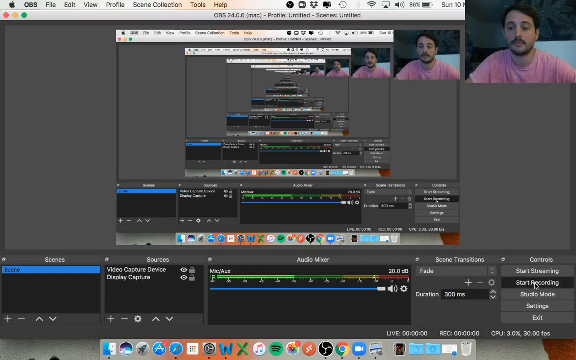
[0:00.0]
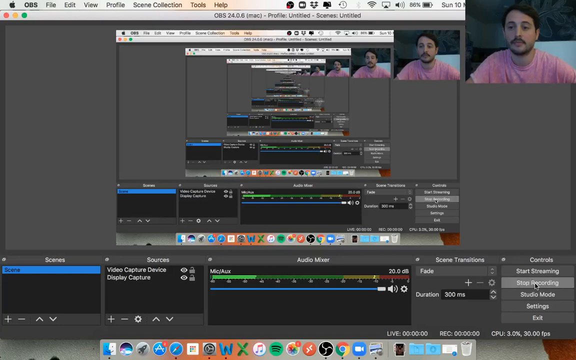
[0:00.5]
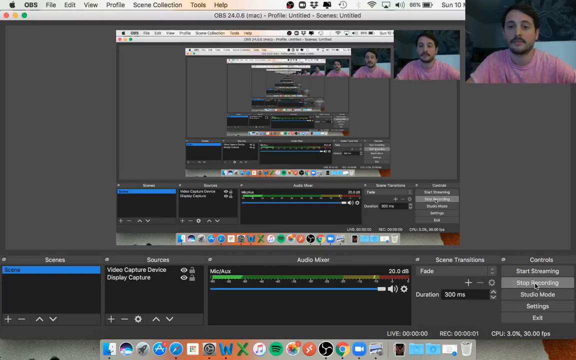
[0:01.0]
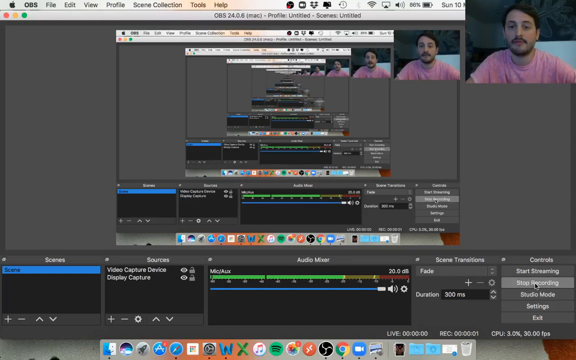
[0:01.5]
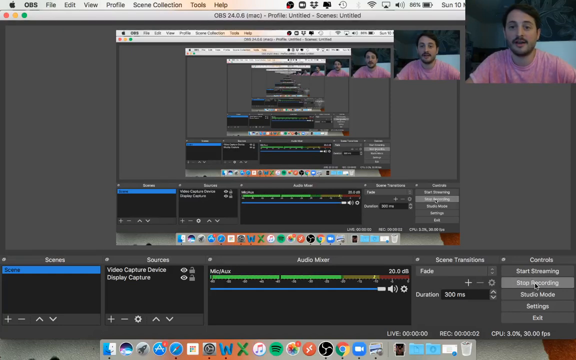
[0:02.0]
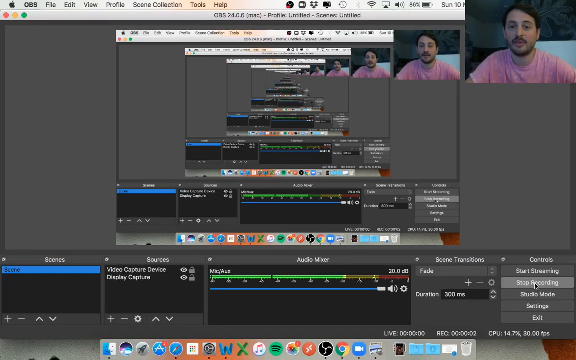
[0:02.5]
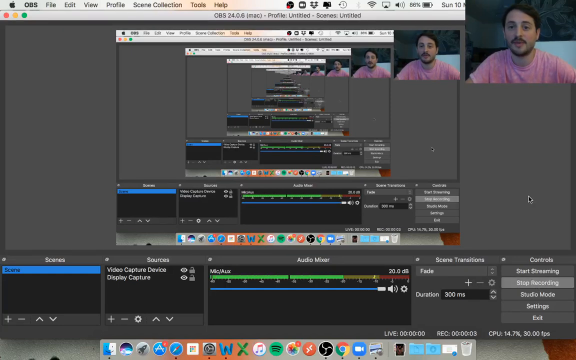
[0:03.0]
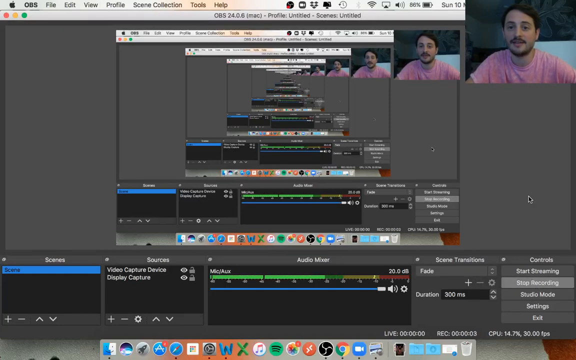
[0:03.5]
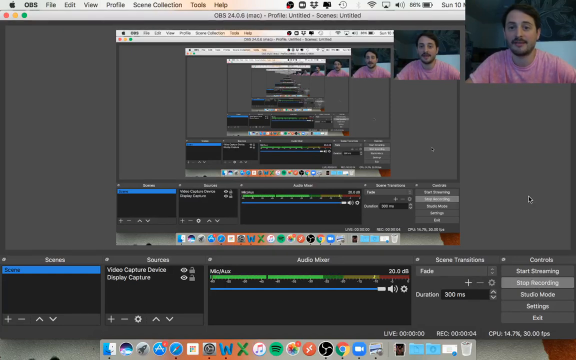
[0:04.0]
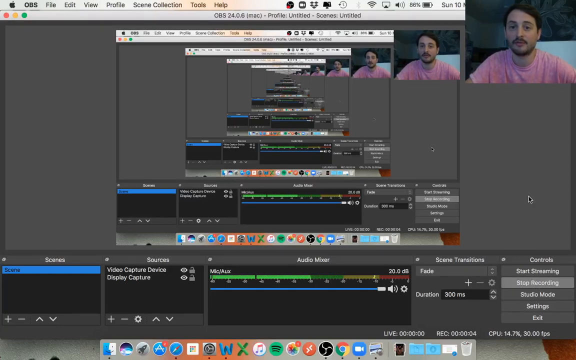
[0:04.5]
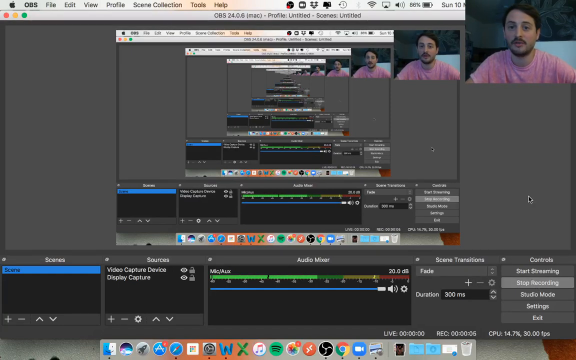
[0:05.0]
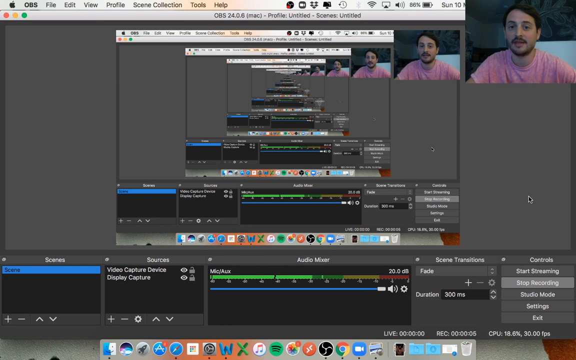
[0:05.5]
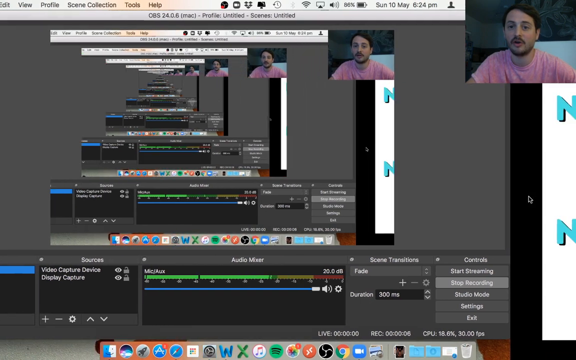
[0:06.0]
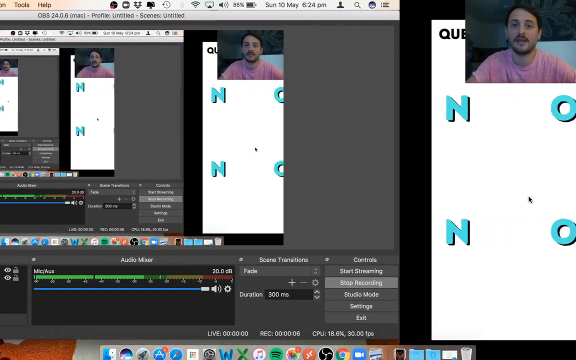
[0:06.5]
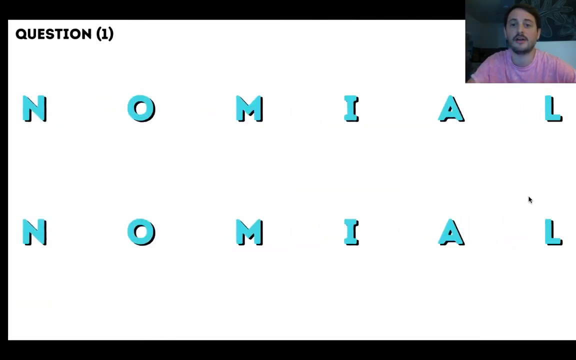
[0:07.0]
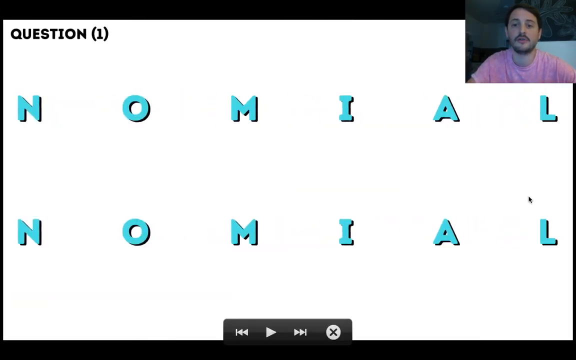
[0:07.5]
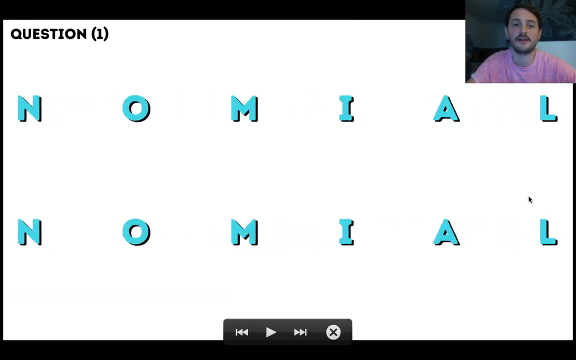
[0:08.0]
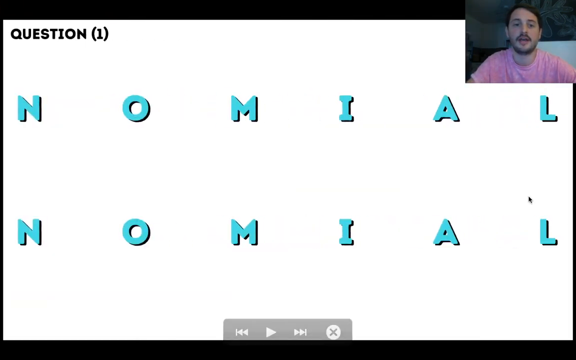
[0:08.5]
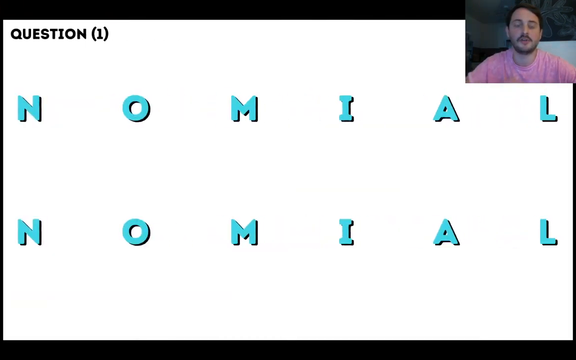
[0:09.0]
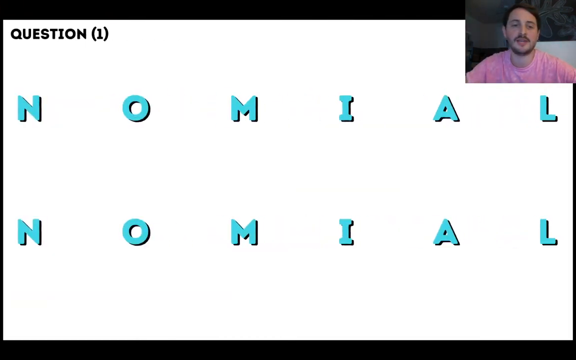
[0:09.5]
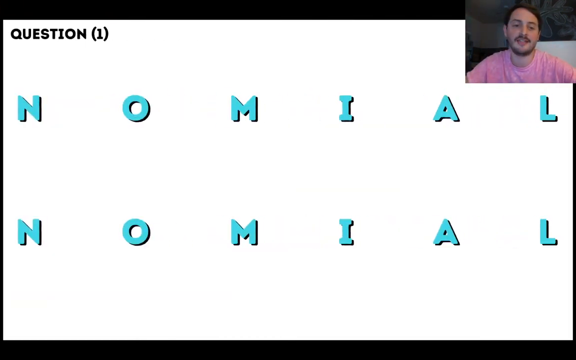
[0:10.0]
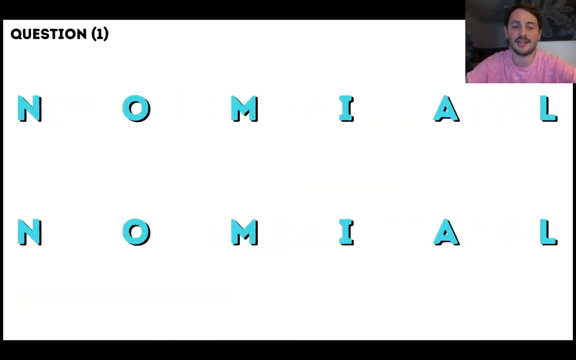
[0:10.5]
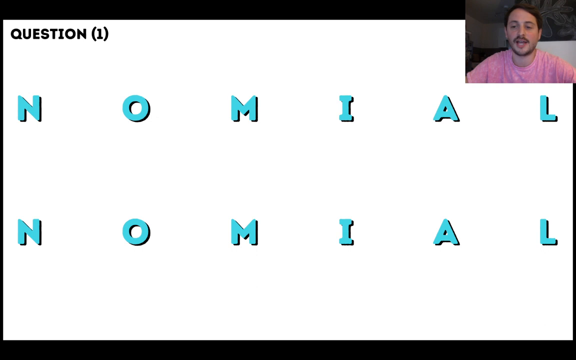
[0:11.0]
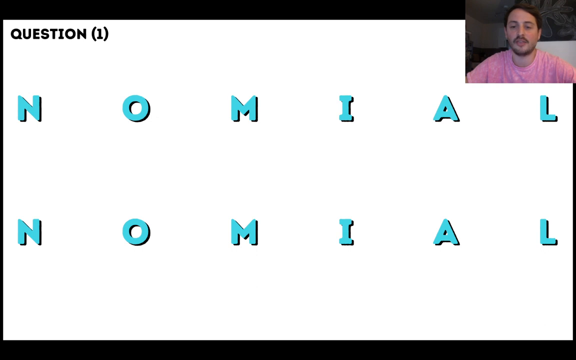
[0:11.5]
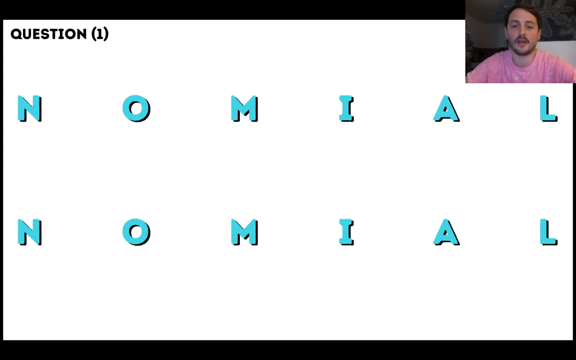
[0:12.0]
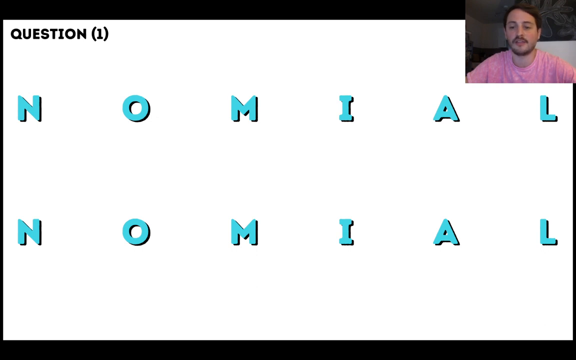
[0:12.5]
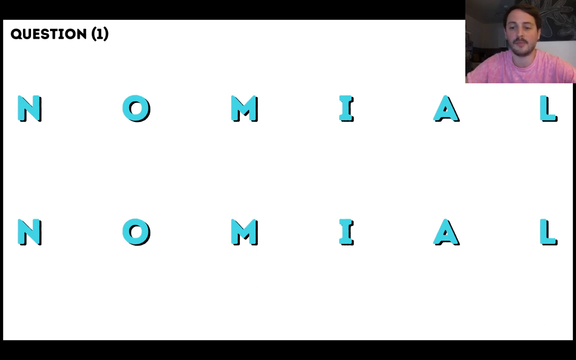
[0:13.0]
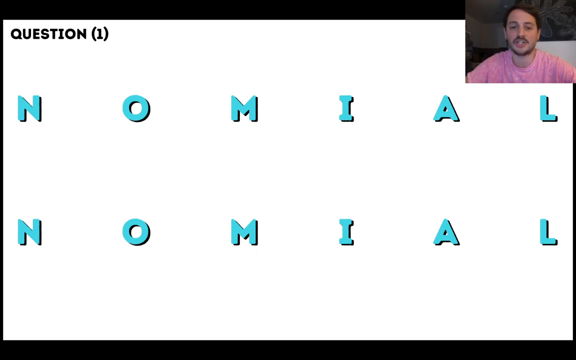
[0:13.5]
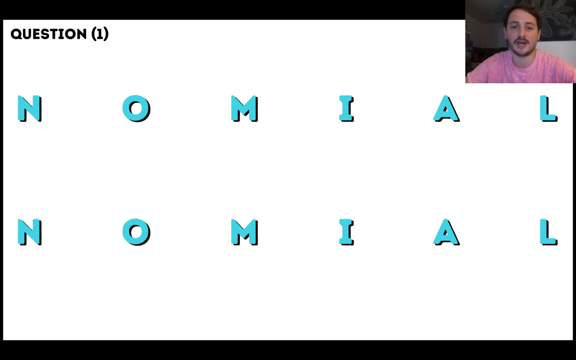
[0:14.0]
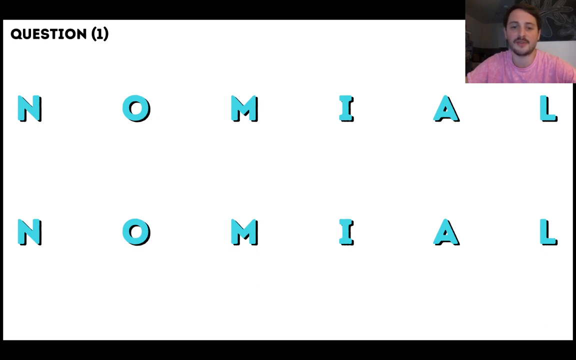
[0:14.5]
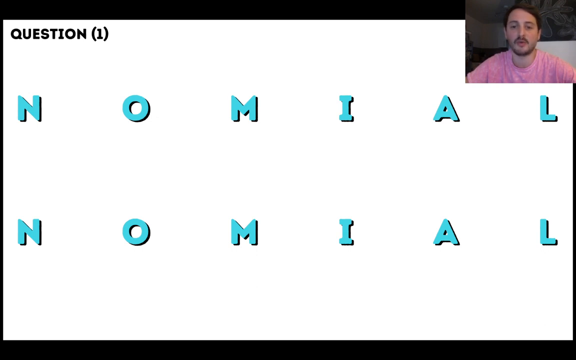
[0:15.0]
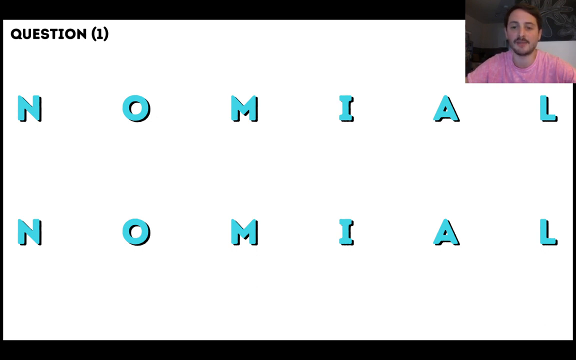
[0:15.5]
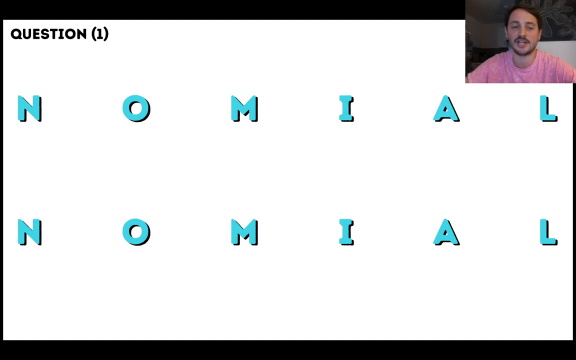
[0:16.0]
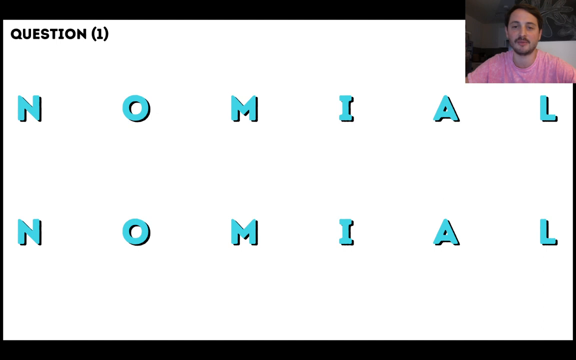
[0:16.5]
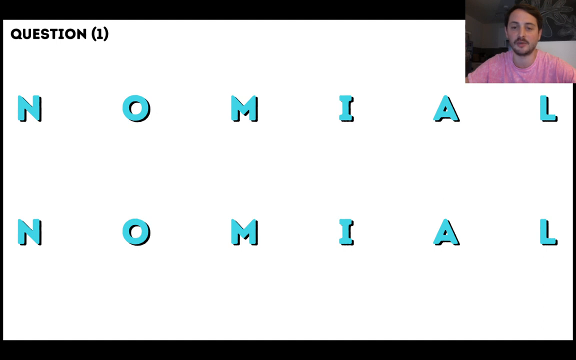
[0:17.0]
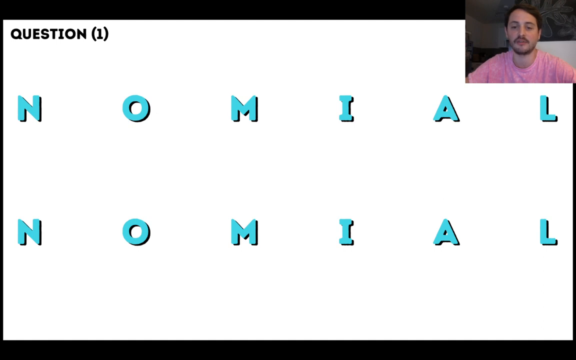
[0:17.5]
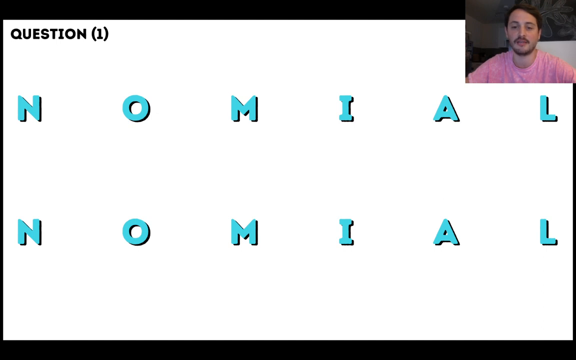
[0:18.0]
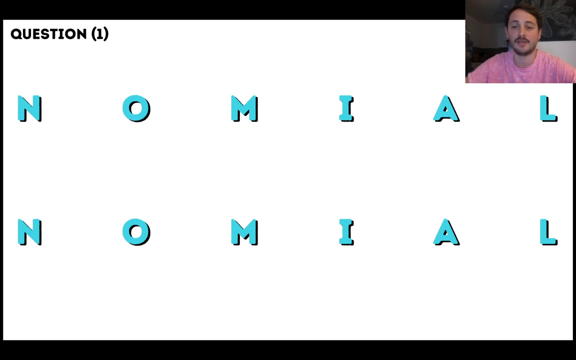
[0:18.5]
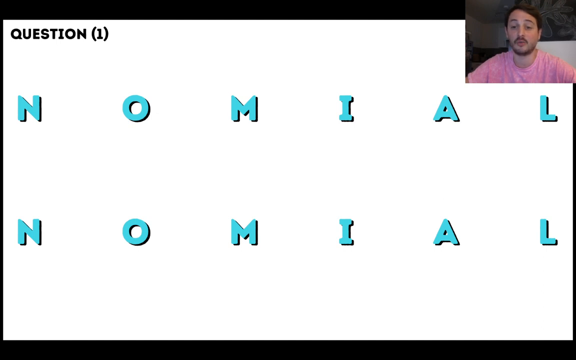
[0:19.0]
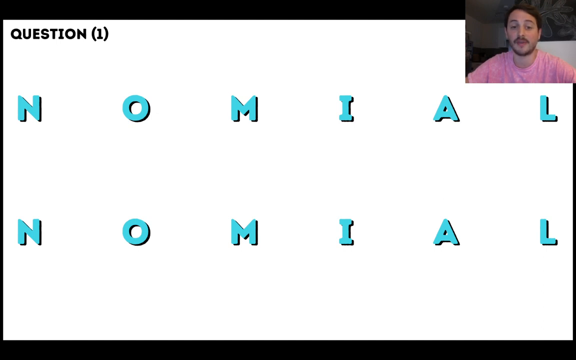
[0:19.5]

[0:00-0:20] The video opens on a screen that seems to contain multiple screens within it, like an infinity loop. A man in the top right is speaking; he wears a pink shirt and has a dark mustache and beard with matching hair. The first screen he shows seems to be an audio mixer, since it reads "audio mixer" and has a few ranges and a sound bar at the bottom. The screens then recede, gradually getting smaller and smaller in a loop until they become completely small. The view then switches to a white screen with slightly 3D, bold turquoise text reading "nomial" at the top and "nomial" again just below it, with "Question (1)" in black in the top left. Each turquoise letter has a black, somewhat 3D backing behind it, and the letters are spread out; both words are in exactly the same color and font. The man remains in the top right, speaking.